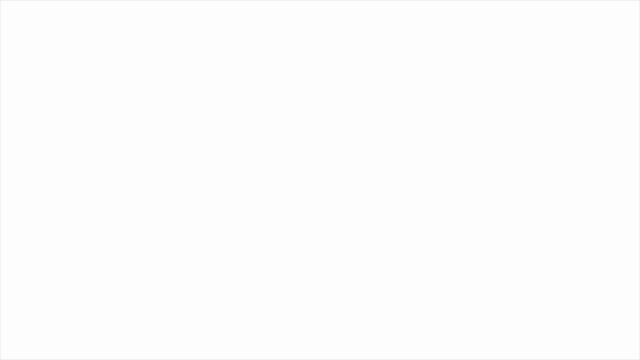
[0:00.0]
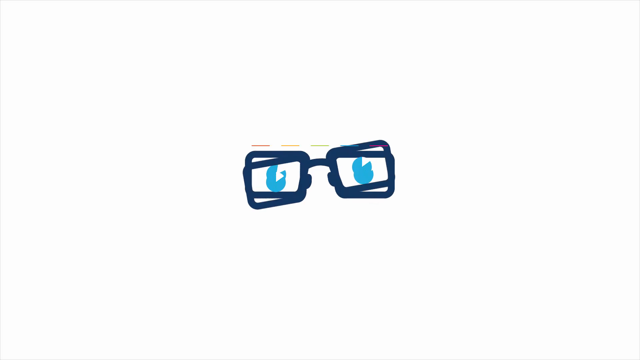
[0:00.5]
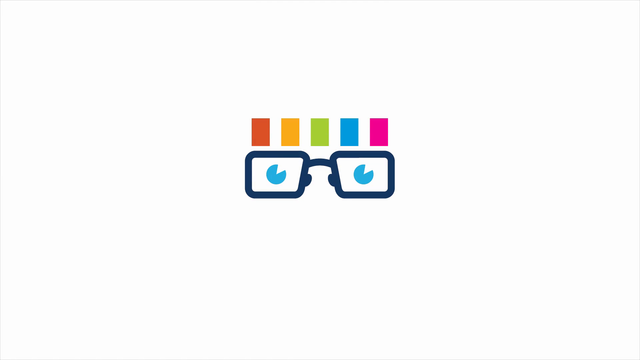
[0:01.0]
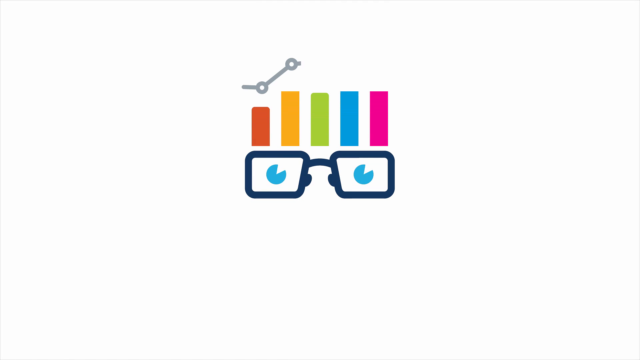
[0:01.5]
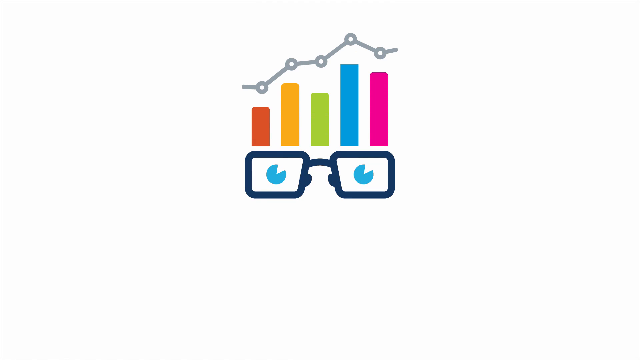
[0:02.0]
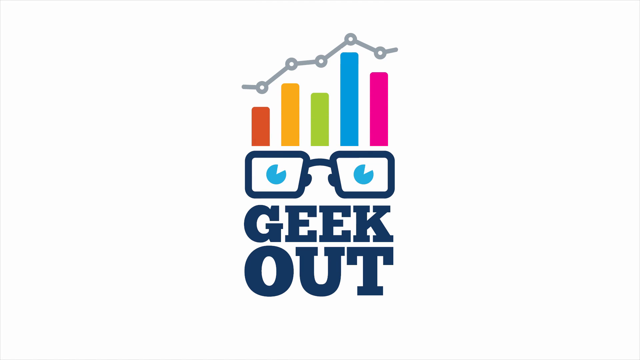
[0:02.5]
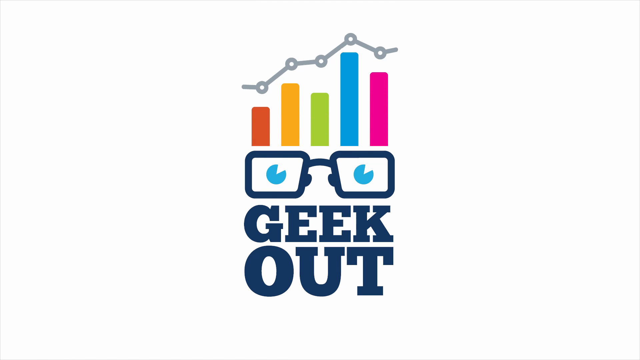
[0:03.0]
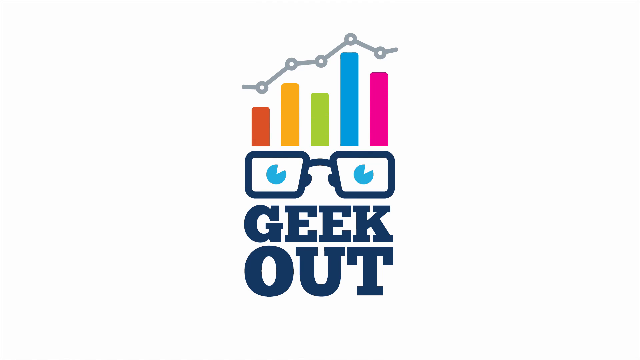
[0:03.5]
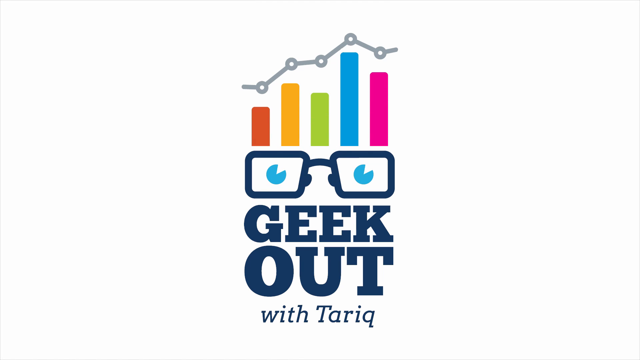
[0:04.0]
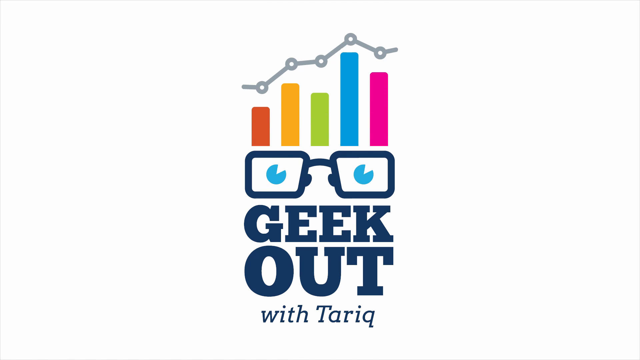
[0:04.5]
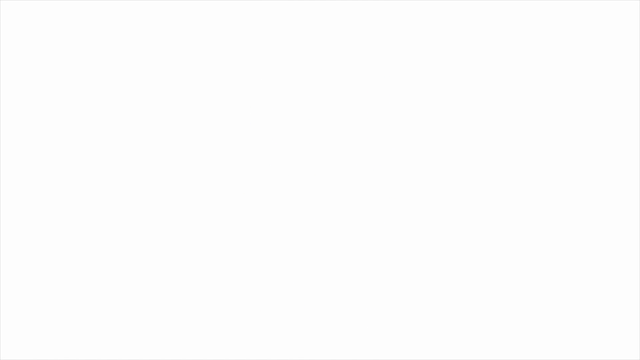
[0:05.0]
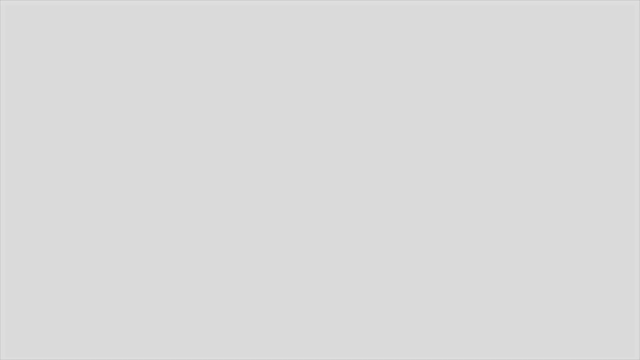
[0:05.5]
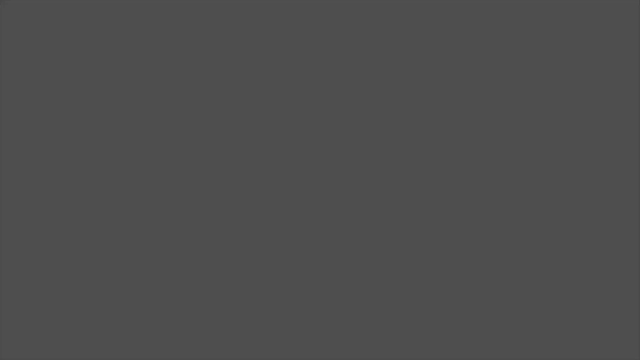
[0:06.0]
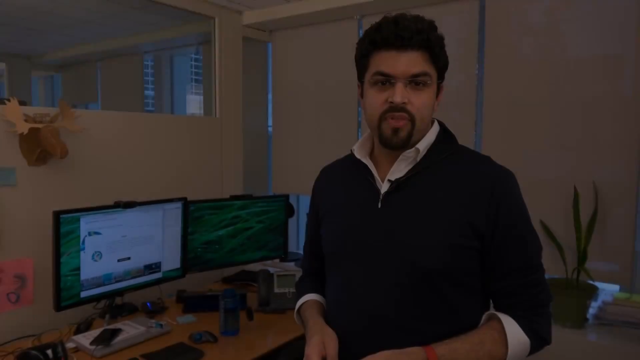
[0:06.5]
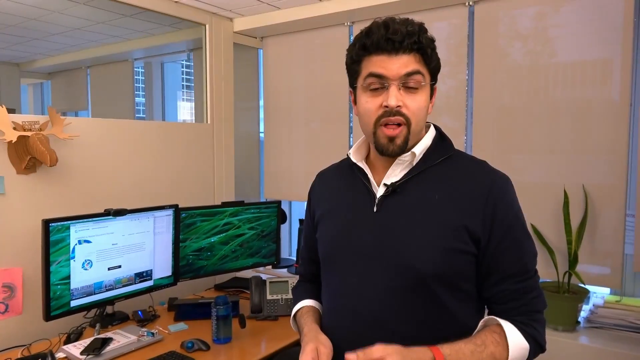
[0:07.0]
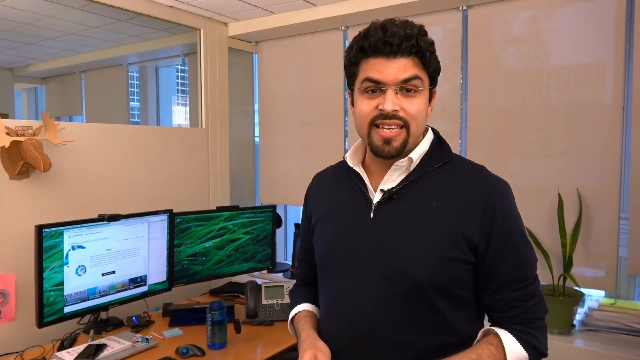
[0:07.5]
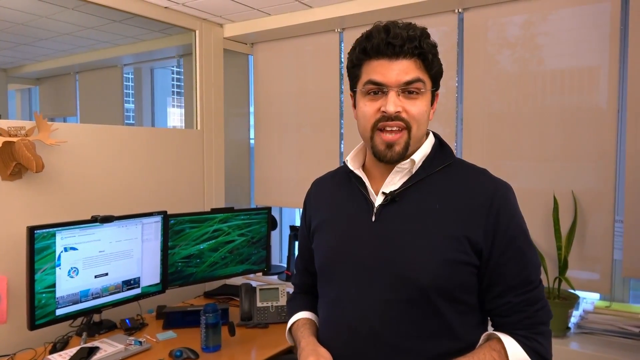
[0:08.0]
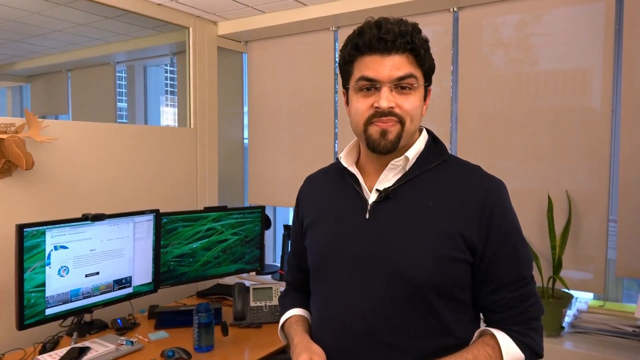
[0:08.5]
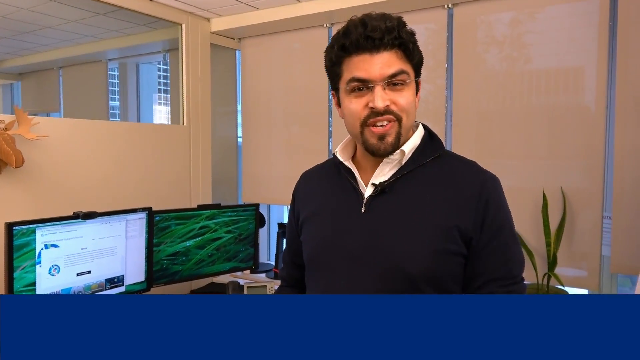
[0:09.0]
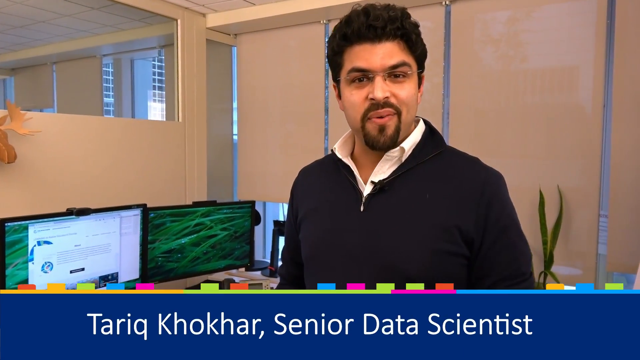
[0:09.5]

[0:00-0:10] A man who looks like a professional, possibly a research analyst or a YouTube influencer, speaks to the camera. The video is apparently called Geek Out with Tariq. He appears to be in his office.